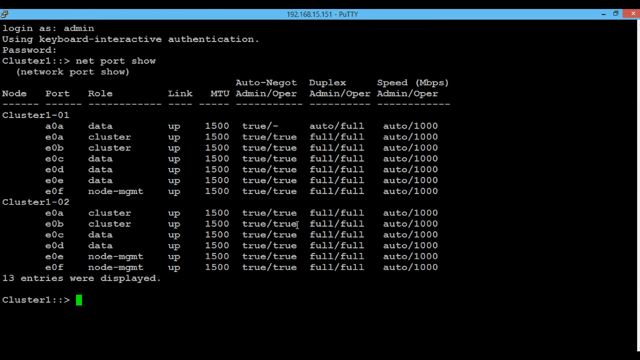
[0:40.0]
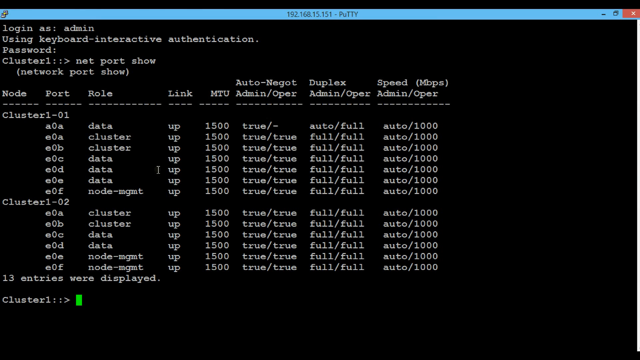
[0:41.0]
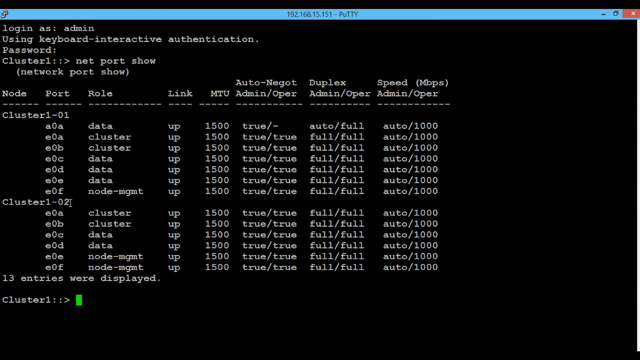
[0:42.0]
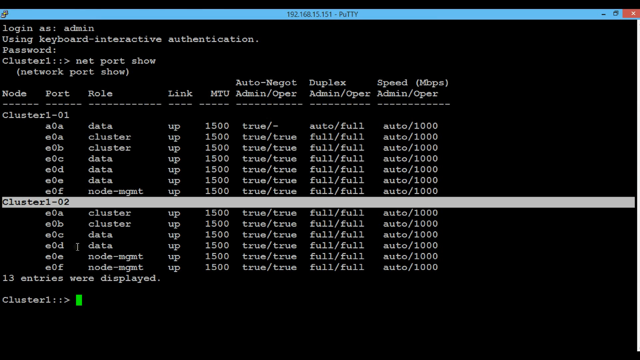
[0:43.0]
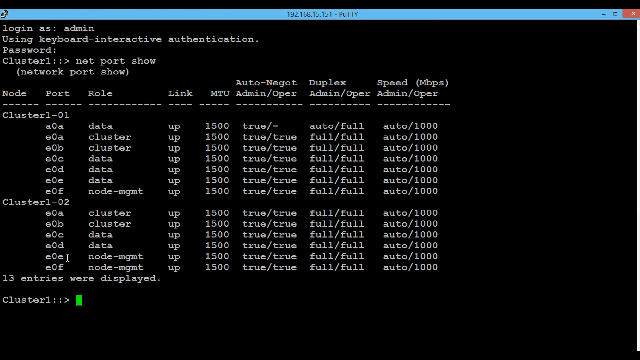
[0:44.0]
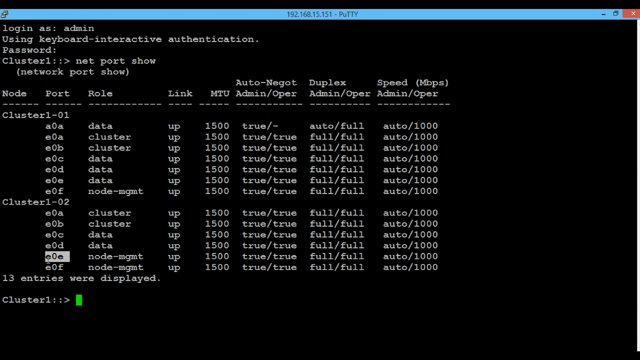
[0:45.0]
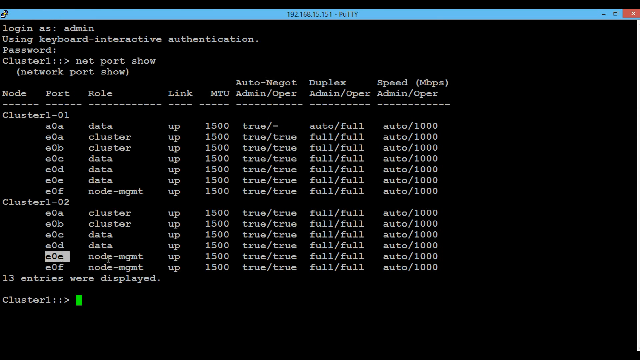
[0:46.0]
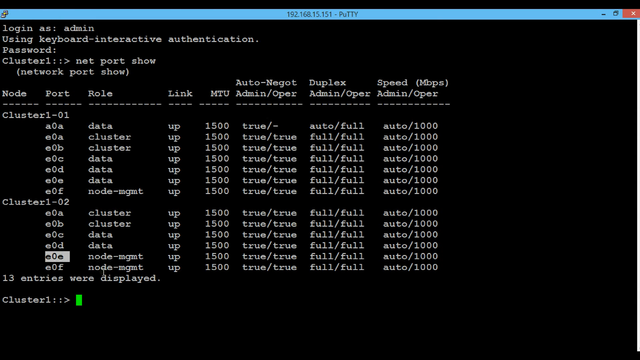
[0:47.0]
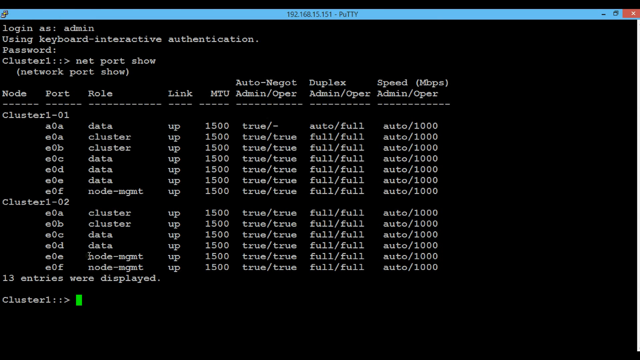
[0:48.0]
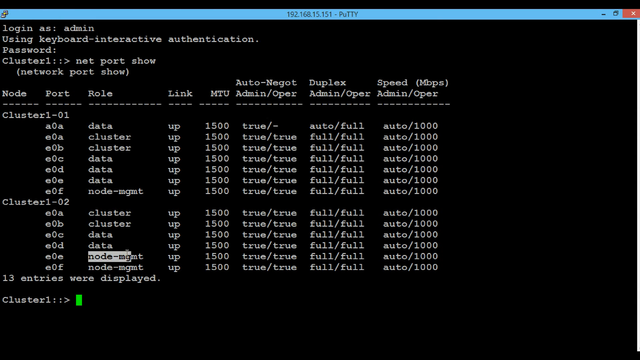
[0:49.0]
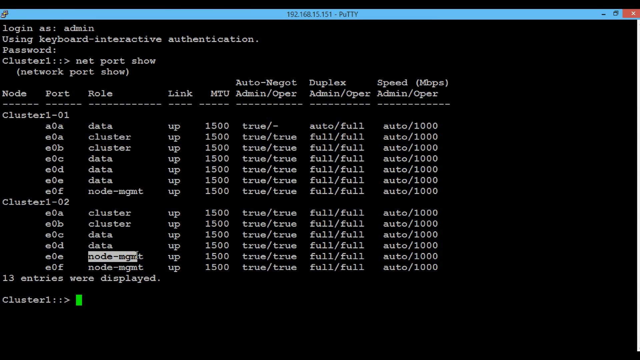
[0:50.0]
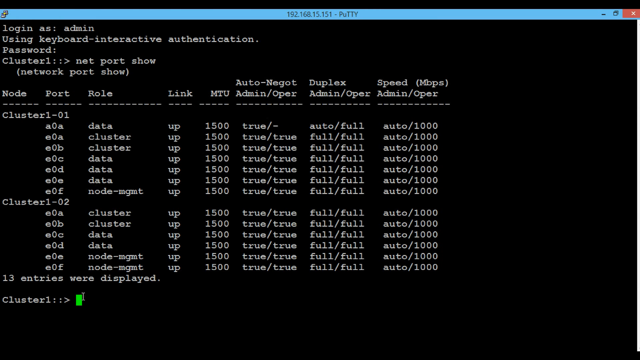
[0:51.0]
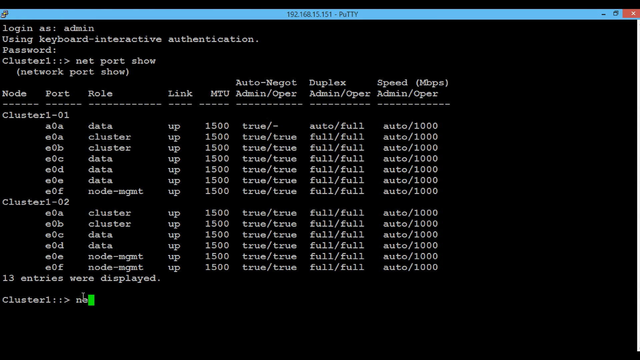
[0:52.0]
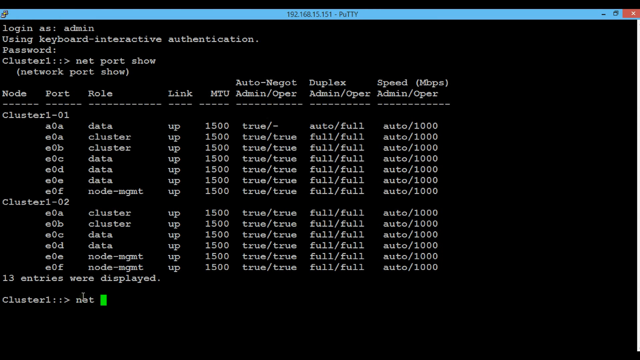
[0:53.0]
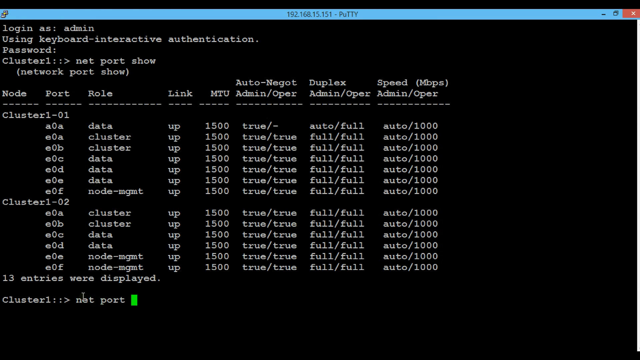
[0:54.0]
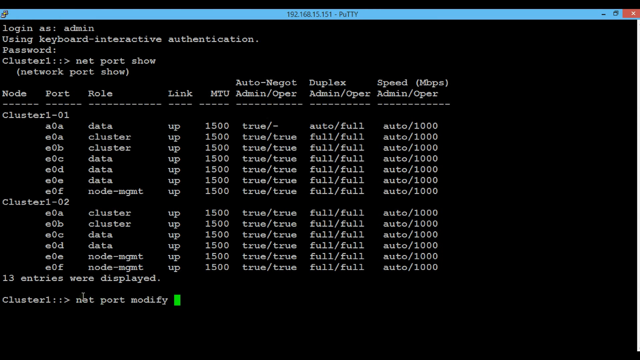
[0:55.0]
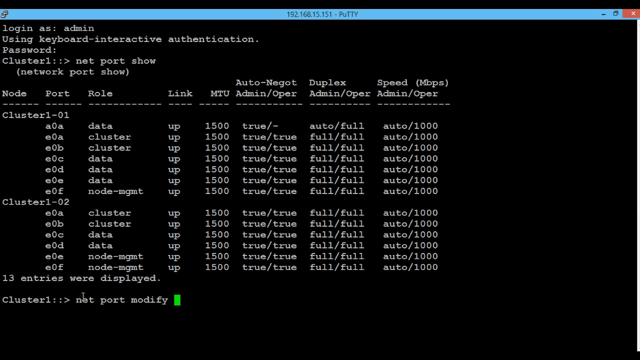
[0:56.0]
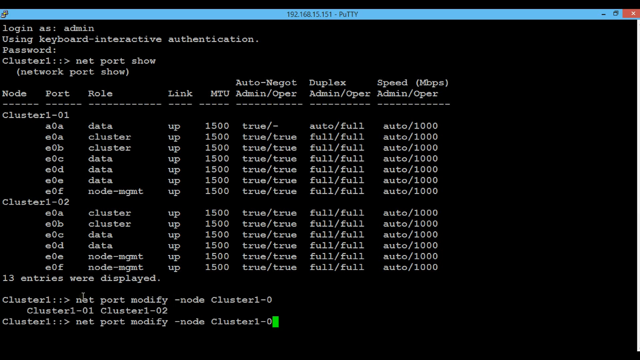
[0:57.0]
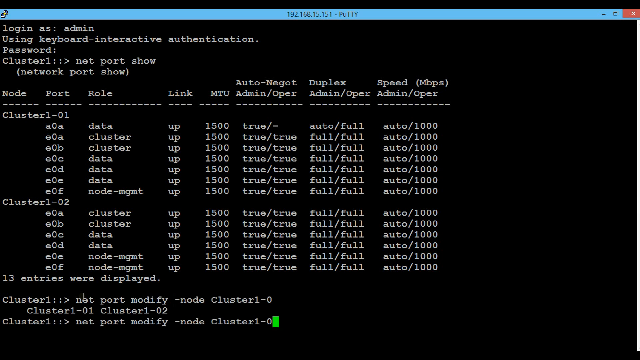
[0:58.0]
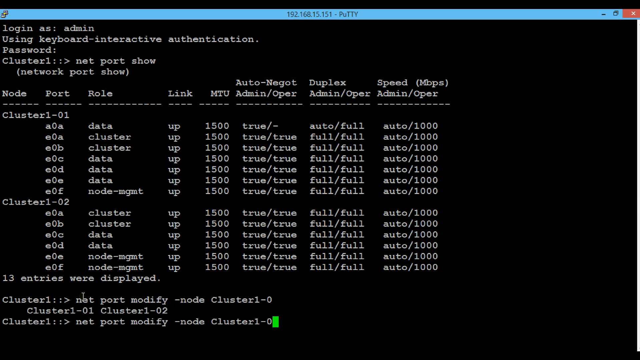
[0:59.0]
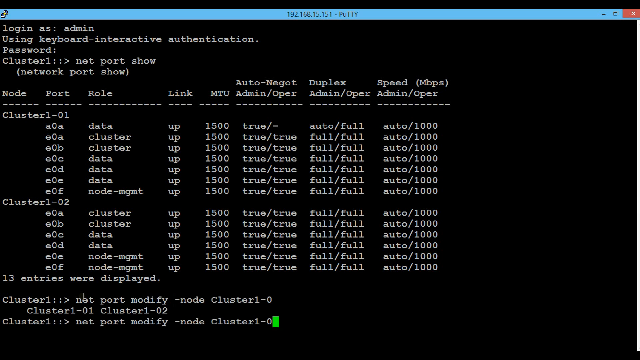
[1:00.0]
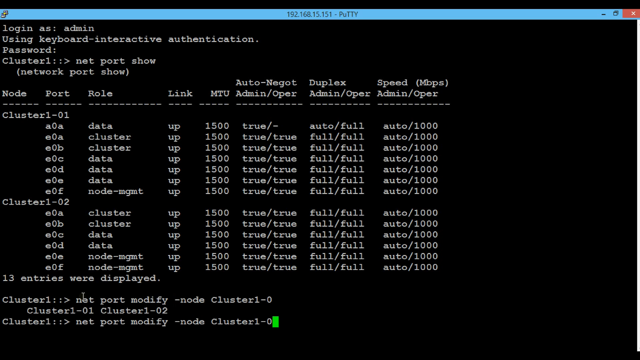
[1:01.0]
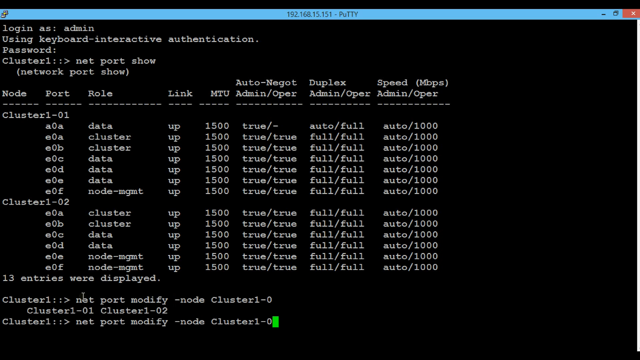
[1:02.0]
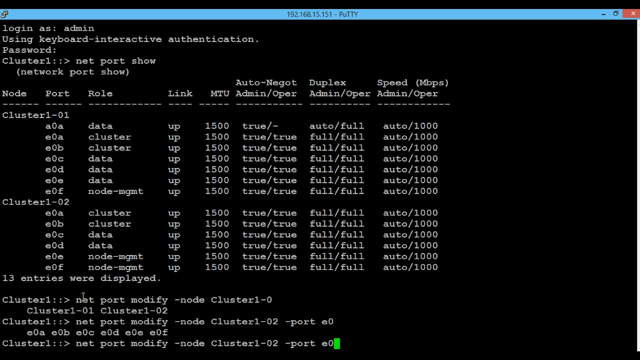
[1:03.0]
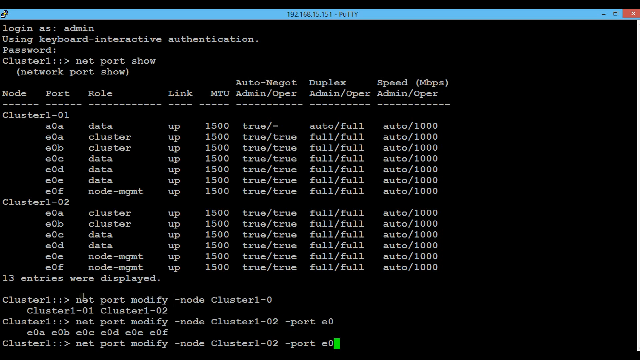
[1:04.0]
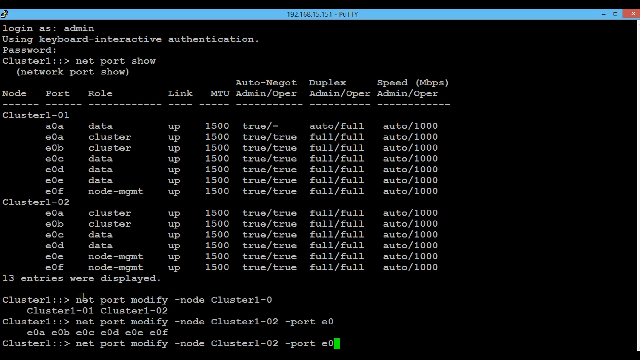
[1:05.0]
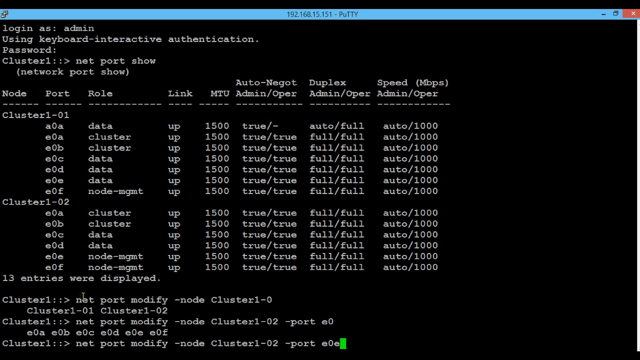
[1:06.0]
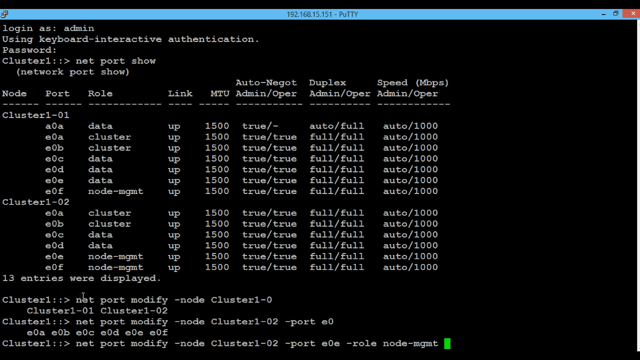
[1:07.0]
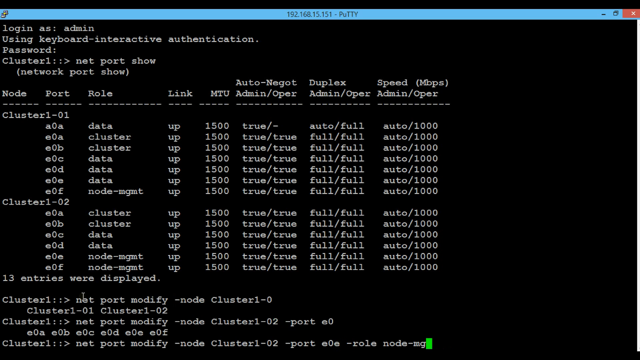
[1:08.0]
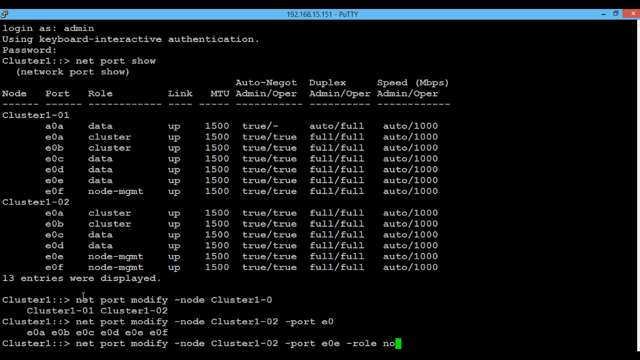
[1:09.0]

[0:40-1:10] A black terminal screen with white text is shown, almost like a Unix box. At the top of the screen is a username of what appears to be "putty" with an IP address of 15216815151. Beneath it the white text reads "login as: admin", "Using keyboard-interactive authentication." and "Password:", with the password empty. Below that is "cluster1::>" followed by "net port show", and on the next line "(network port show)". Underneath is a list with columns for node, port, role, link, MTU, auto-negotiation, admin operation, duplex admin operation, speed in megabits per second, and admin operator. Two cluster sets are listed with "true", and below the second it says "13 entries were displayed." An open "cluster" command prompt follows with nothing after it. The middle cluster is highlighted by what appears to be a mouse on the screen, and then the highlight moves down to node management. Typing begins: "net port modify node cluster". It appears the same command continues to be typed and the same response is repeatedly put on screen.